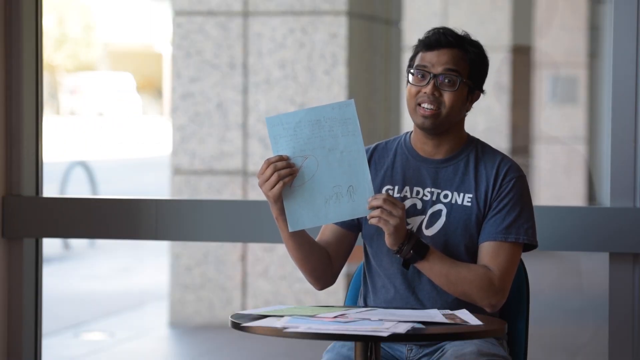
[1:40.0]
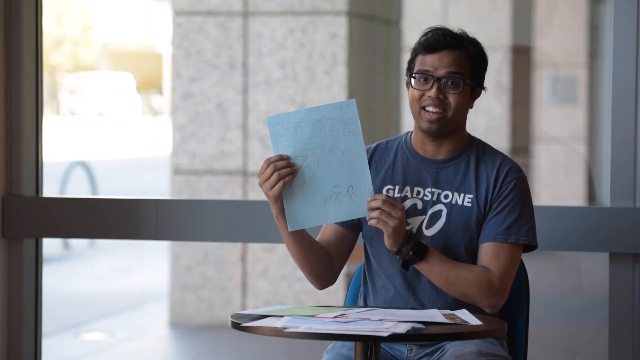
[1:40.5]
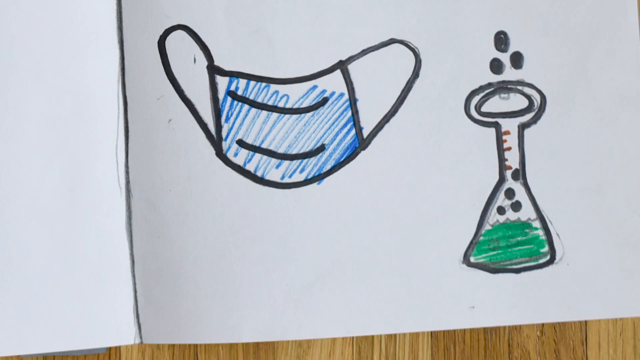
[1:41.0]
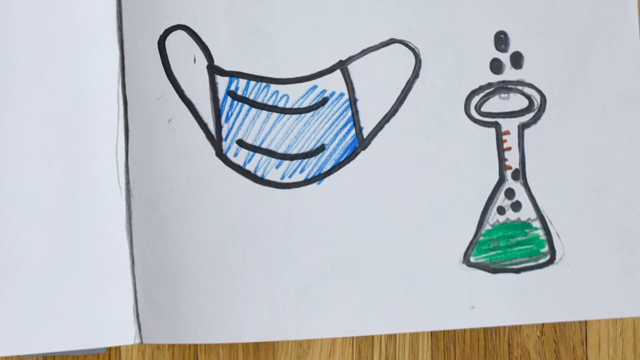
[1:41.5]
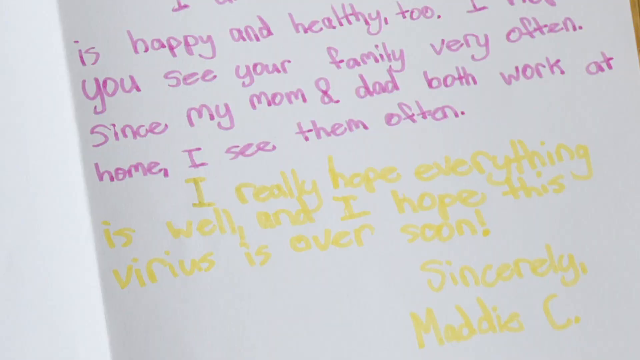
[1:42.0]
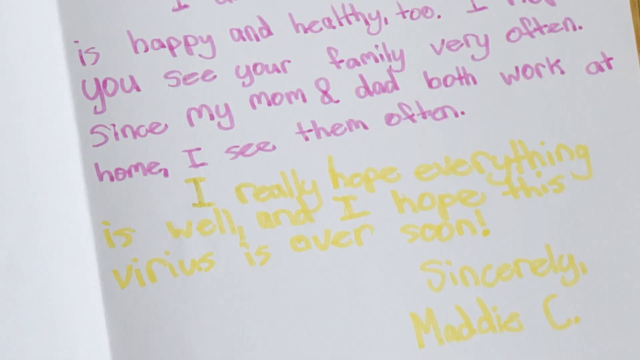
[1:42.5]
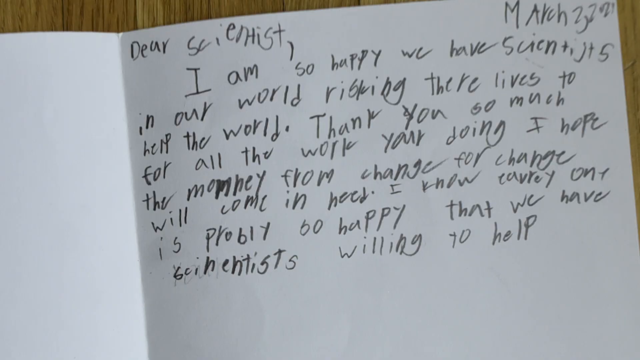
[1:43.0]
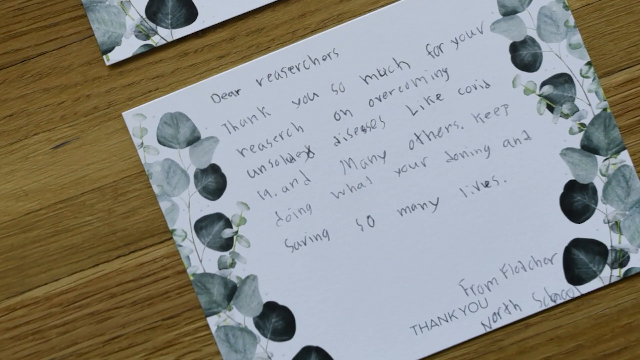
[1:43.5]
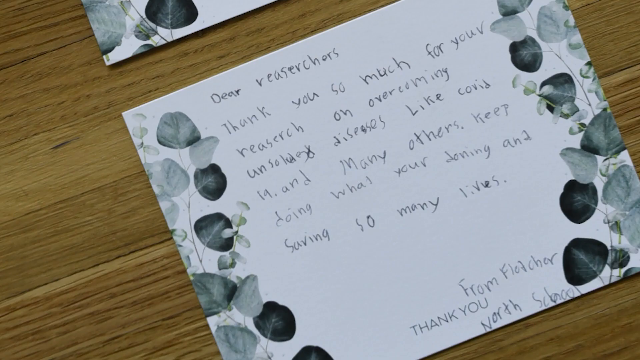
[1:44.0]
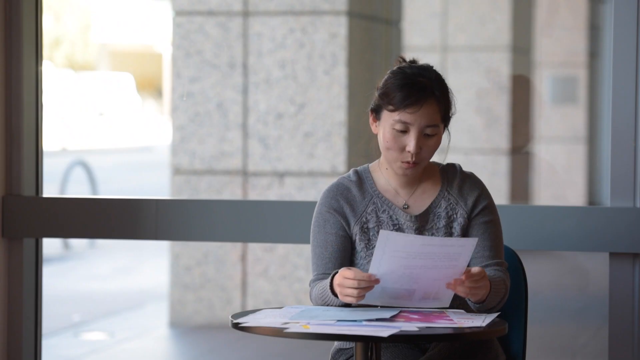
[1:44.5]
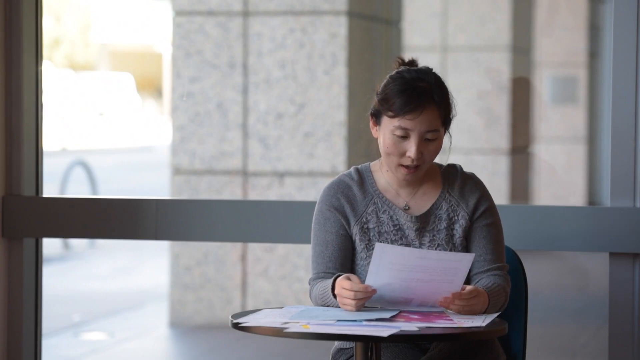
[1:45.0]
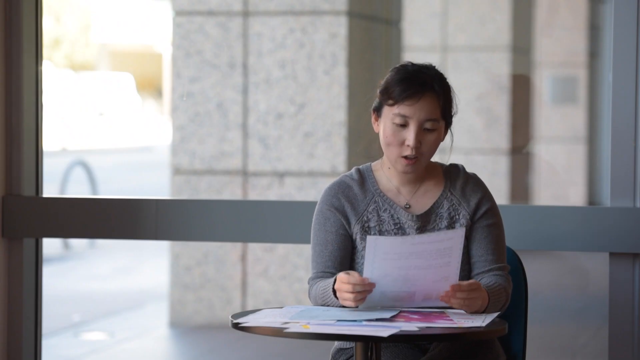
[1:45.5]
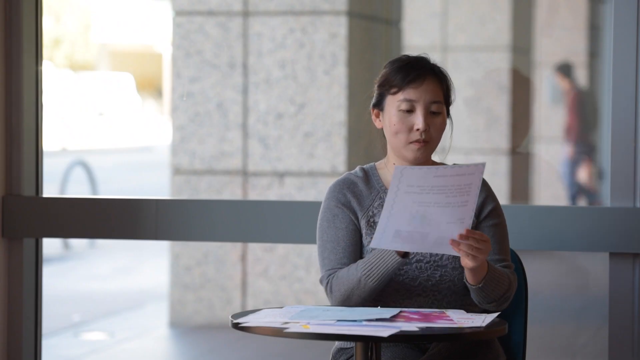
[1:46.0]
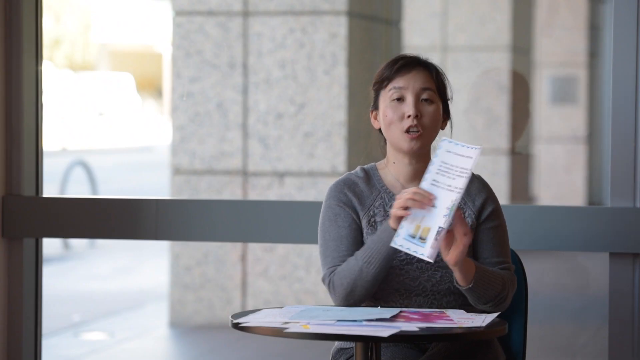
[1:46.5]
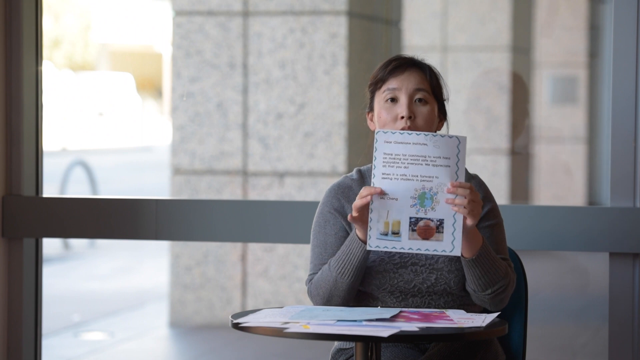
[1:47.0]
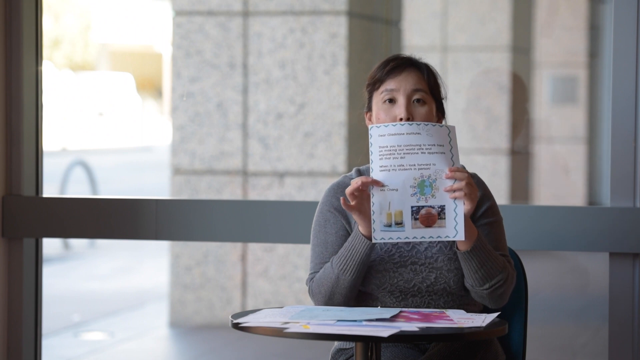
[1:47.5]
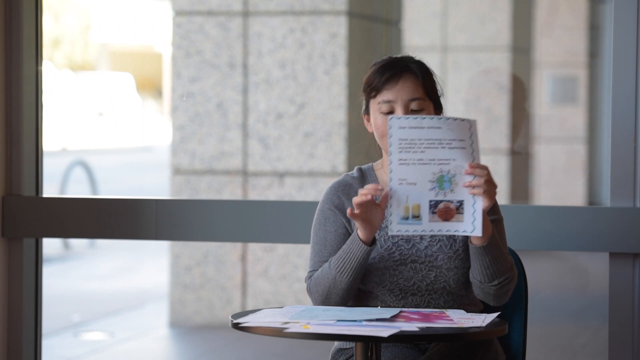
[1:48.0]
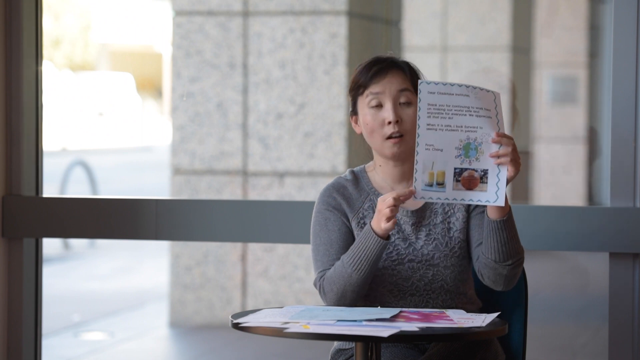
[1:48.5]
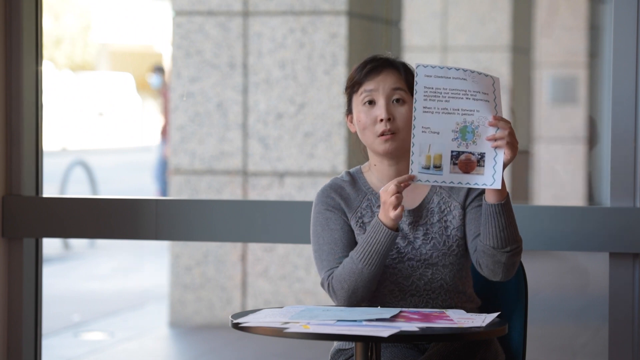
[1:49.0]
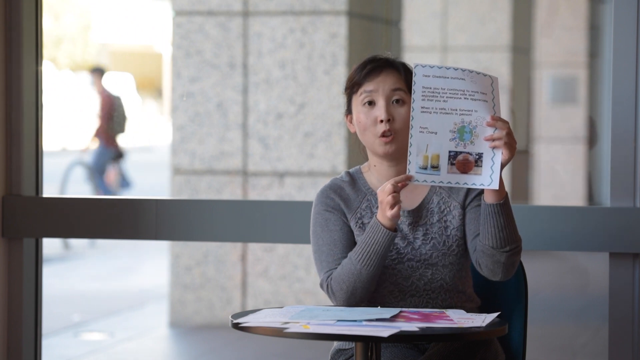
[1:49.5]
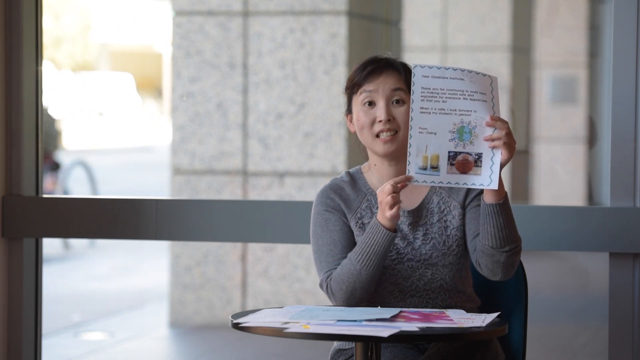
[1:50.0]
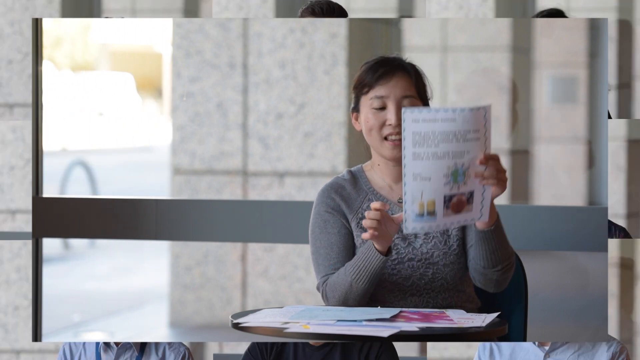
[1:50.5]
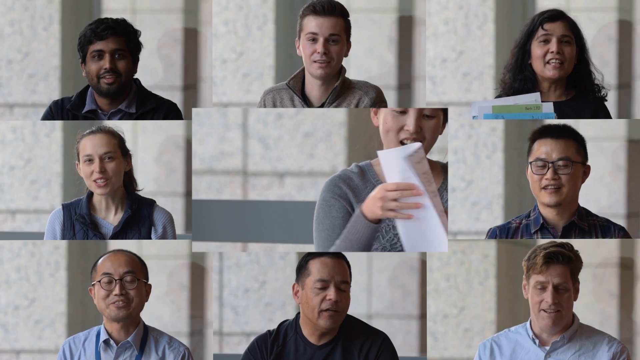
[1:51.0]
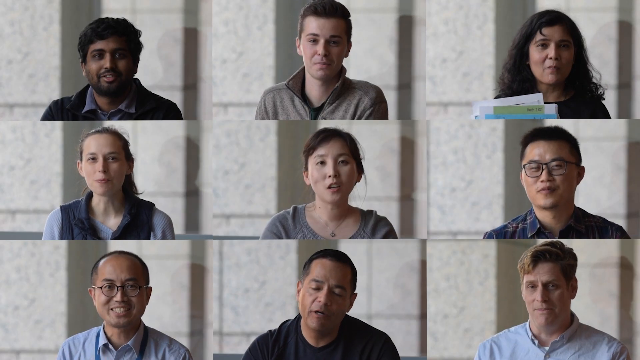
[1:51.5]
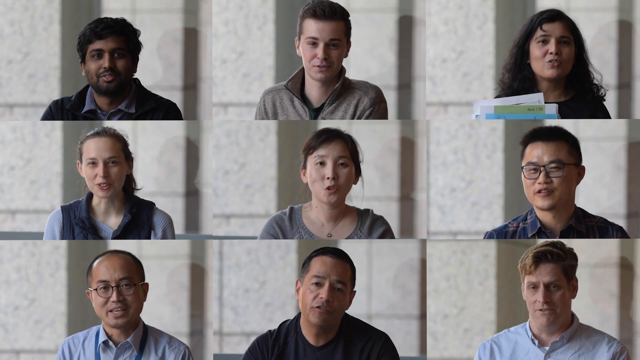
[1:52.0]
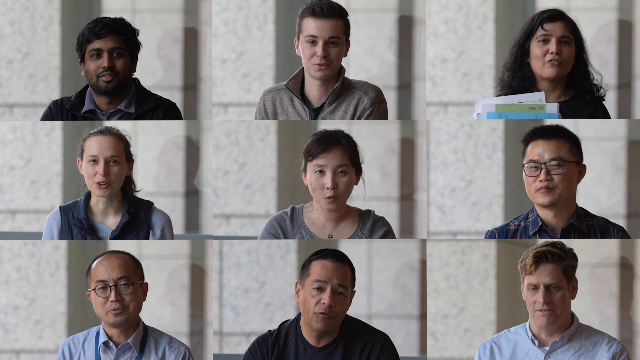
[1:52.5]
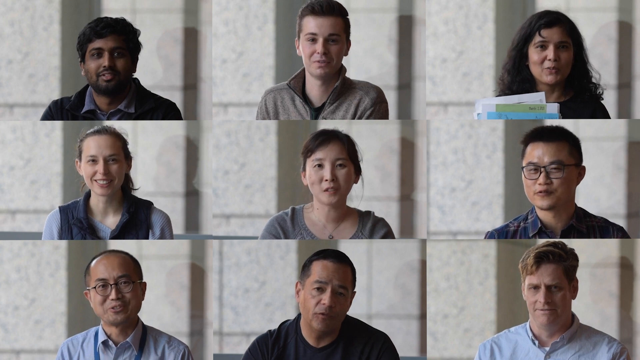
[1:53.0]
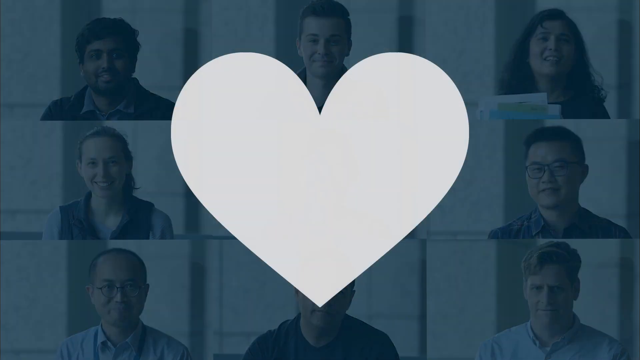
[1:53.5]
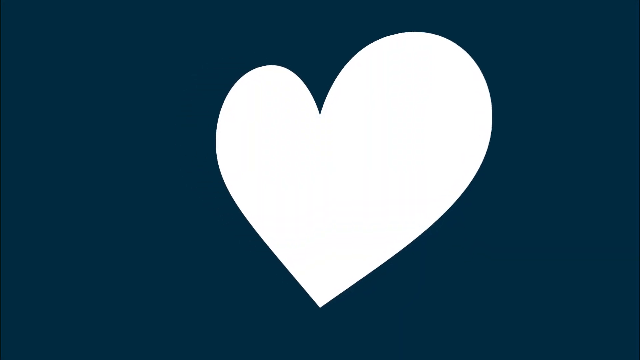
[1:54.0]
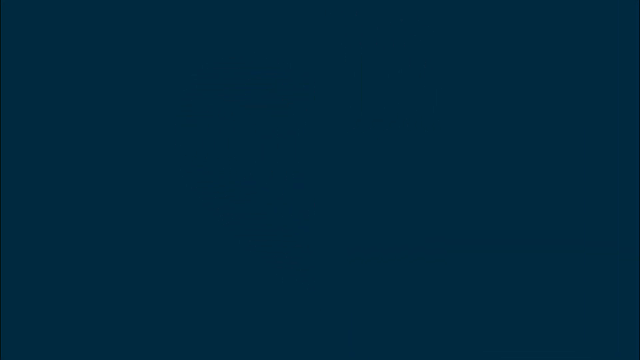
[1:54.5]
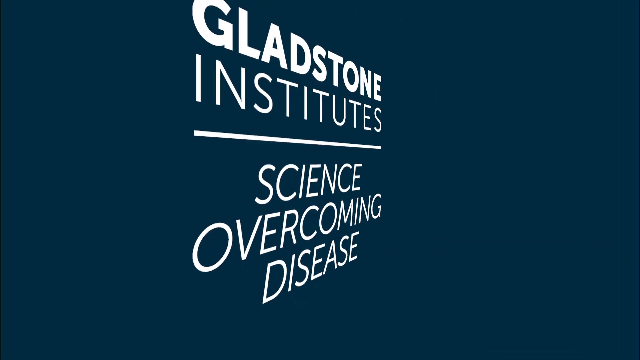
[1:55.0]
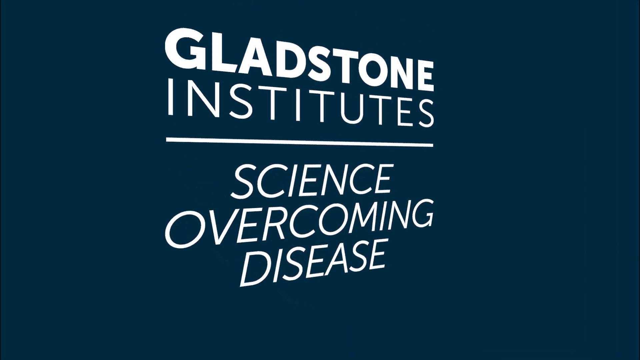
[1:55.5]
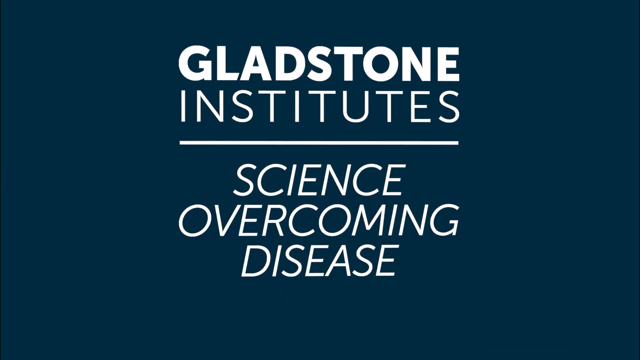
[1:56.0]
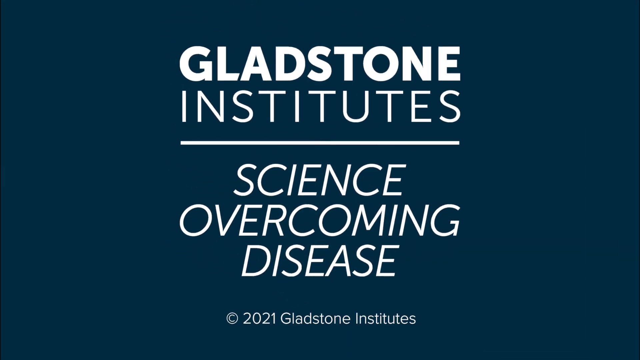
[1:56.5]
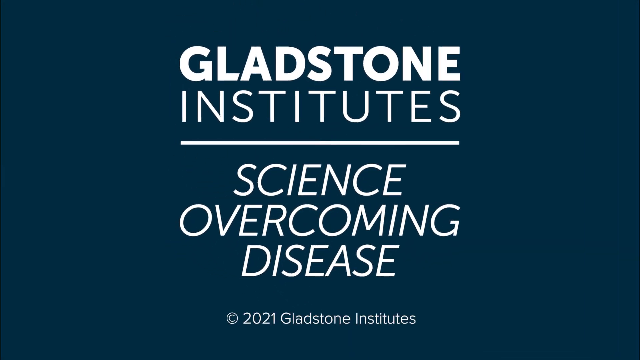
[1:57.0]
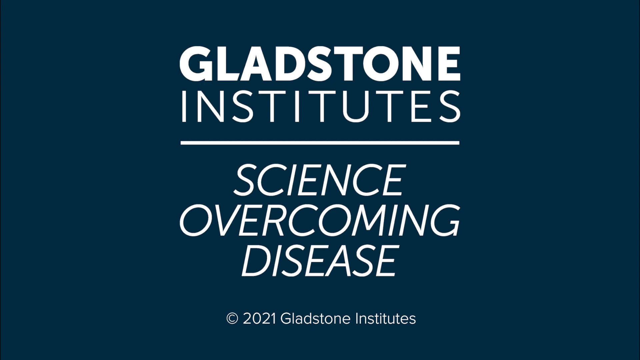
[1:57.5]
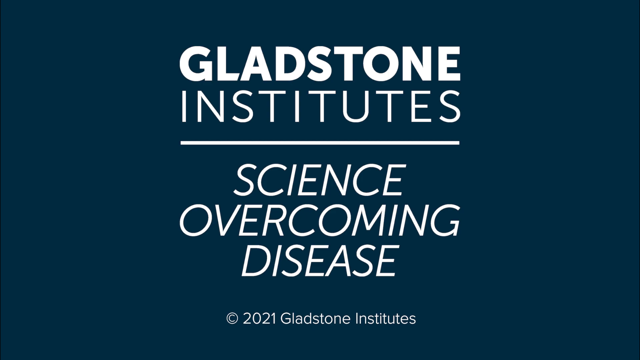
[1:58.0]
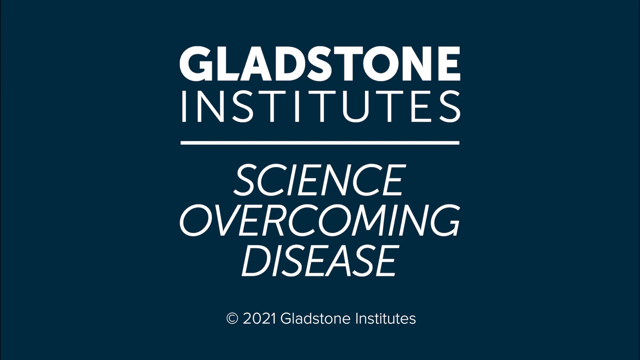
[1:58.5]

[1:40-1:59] Indoors, a very large window lets in a lot of natural light. In front of it, an Indian man with dark skin and glasses sits in a blue chair, talking to the camera while holding a white piece of paper with both hands. He somewhat nods his head. The view then changes to a white piece of paper with a drawing that looks like it was done by a child, possibly a beaker with some liquids. Another card shows "thank you" written in purple and yellow marker, followed by another thank-you card also written by a child, and the sequence continues like that. Finally, a woman who looks Chinese is in the same location and the same chair as the Indian man. She reads from a white piece of paper, clutching it with both hands, then turns the paper around. Her right pointer finger appears to point at something on the paper, and she traces it down the page to the lower right corner.